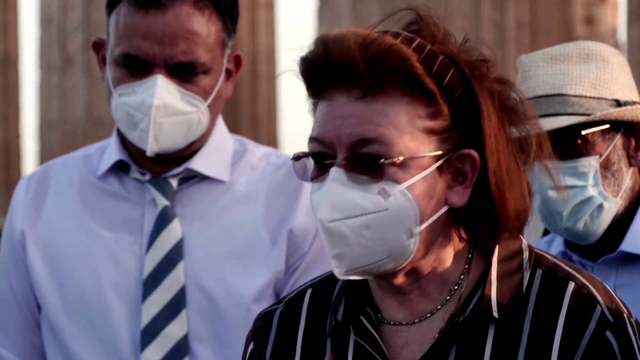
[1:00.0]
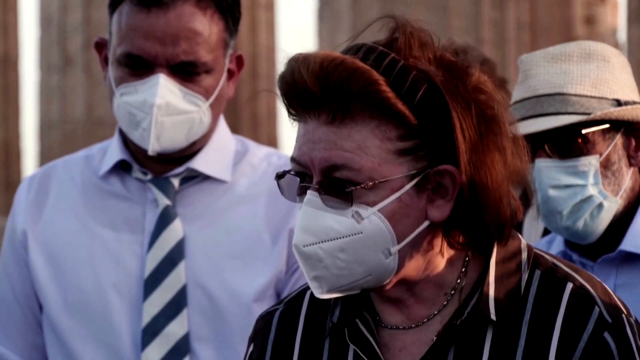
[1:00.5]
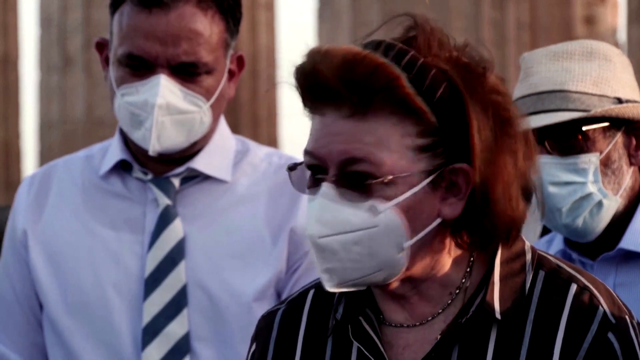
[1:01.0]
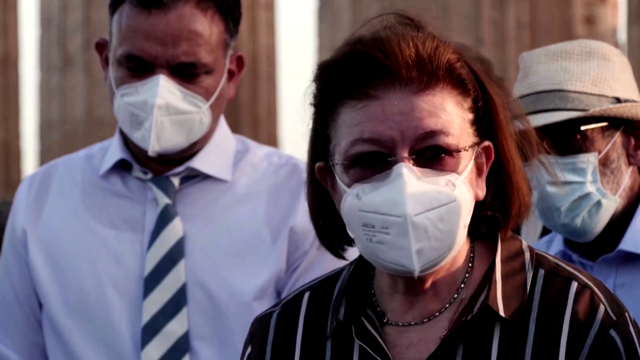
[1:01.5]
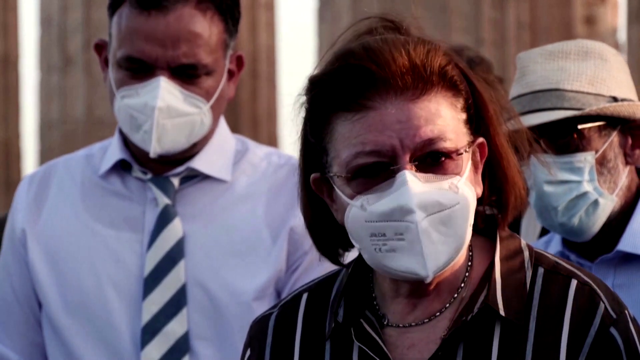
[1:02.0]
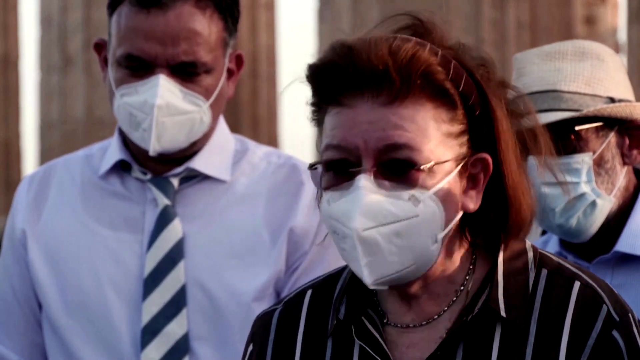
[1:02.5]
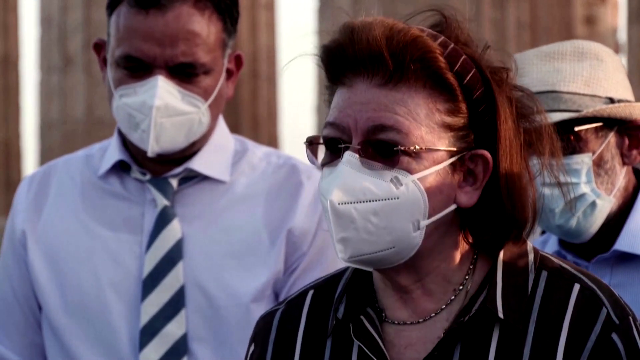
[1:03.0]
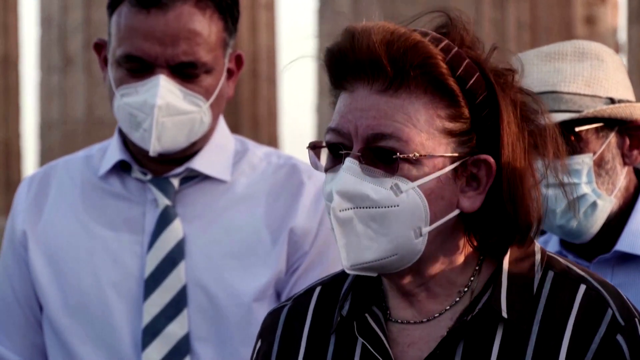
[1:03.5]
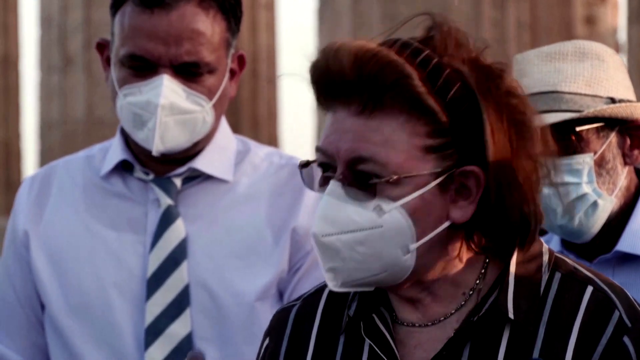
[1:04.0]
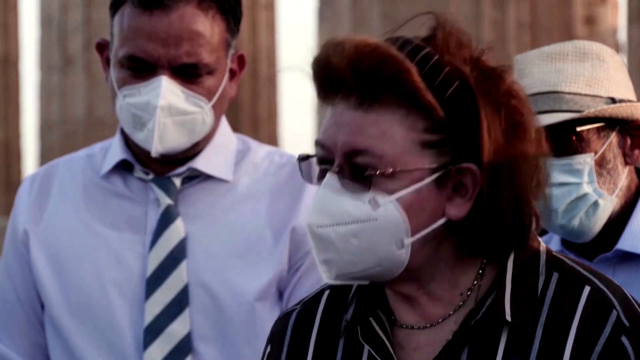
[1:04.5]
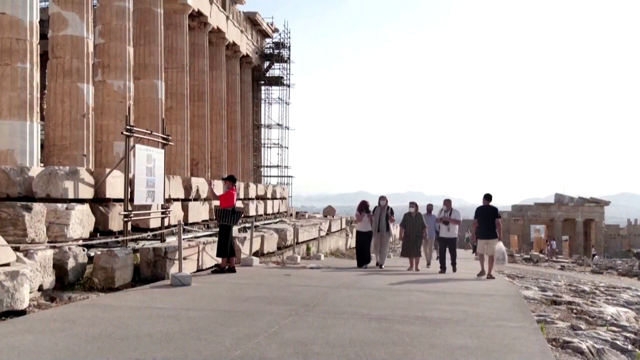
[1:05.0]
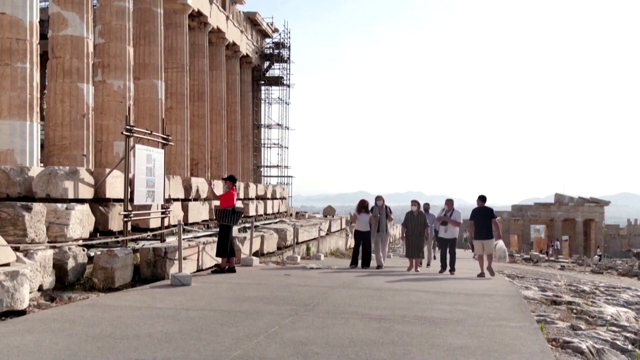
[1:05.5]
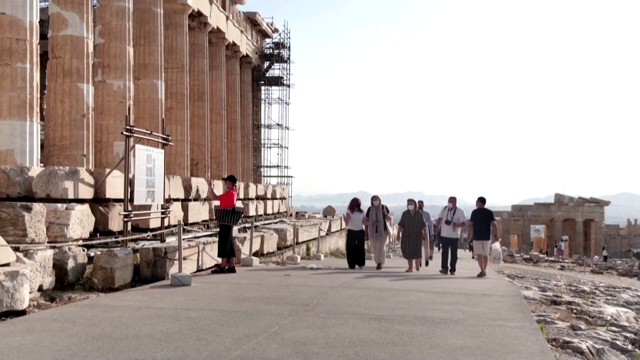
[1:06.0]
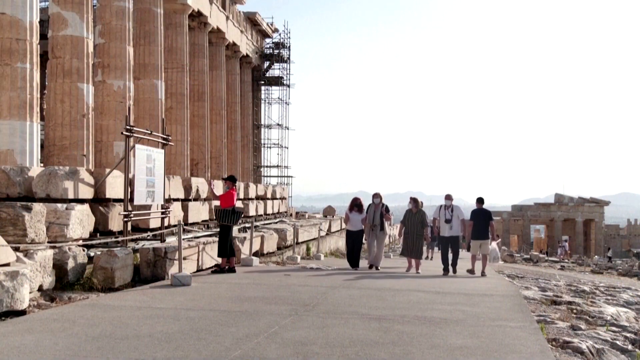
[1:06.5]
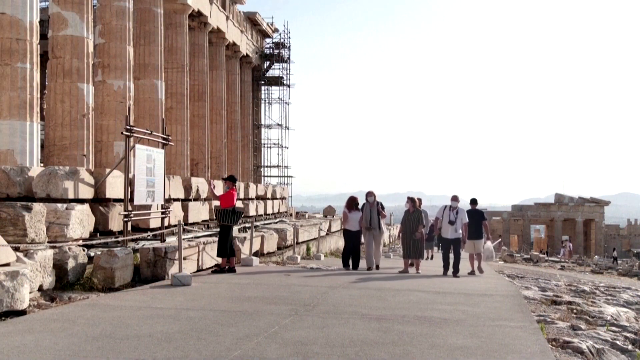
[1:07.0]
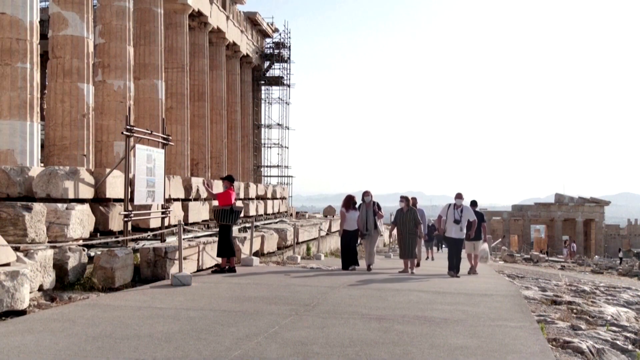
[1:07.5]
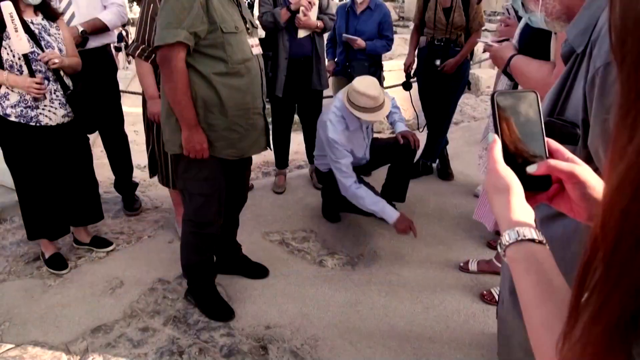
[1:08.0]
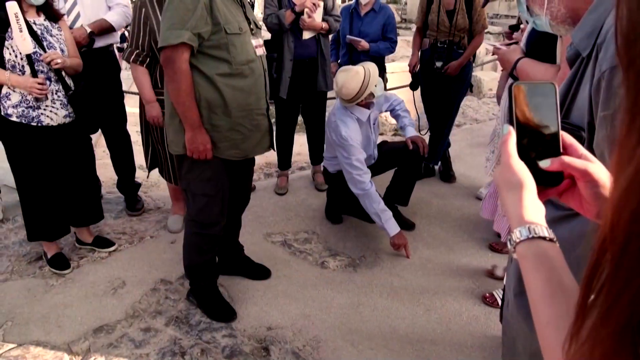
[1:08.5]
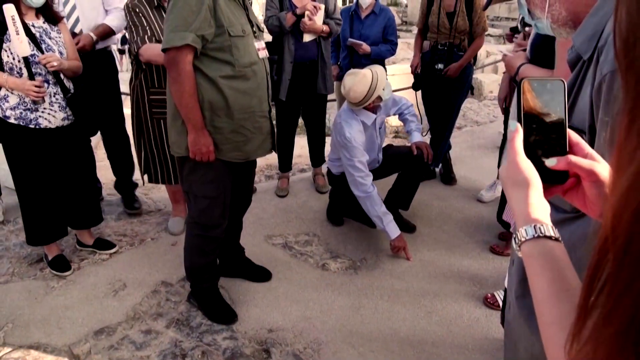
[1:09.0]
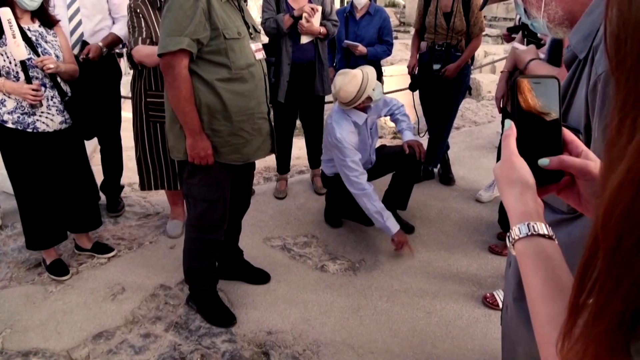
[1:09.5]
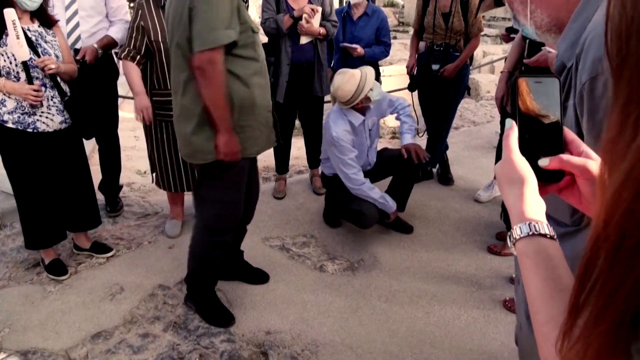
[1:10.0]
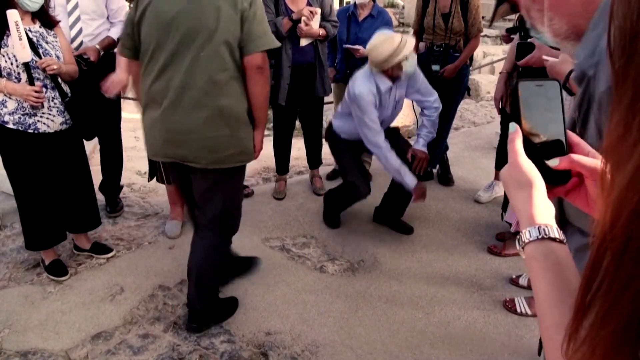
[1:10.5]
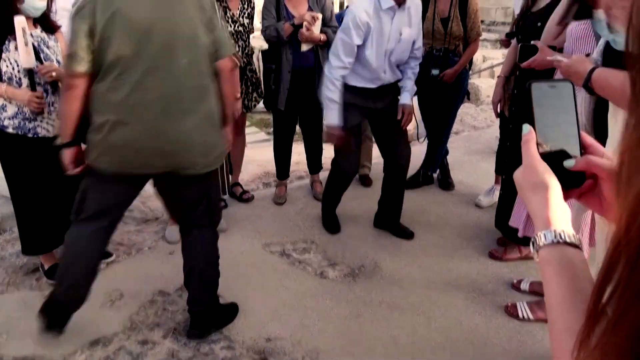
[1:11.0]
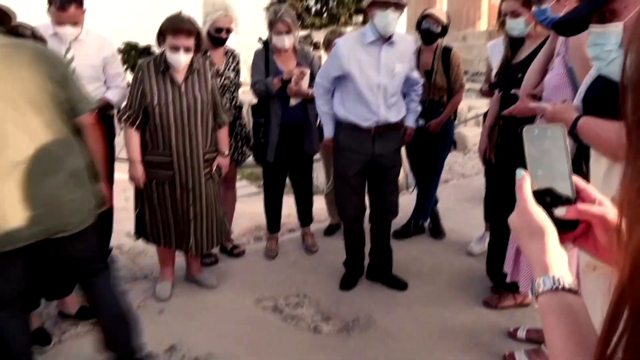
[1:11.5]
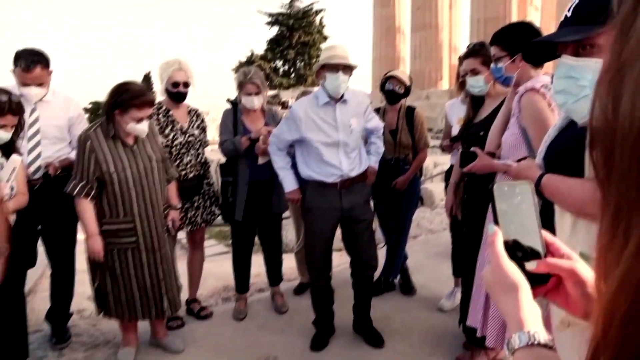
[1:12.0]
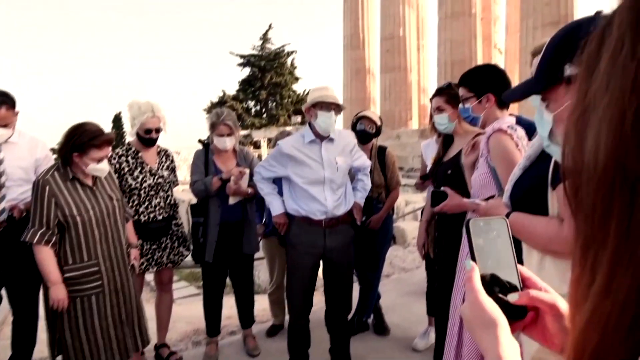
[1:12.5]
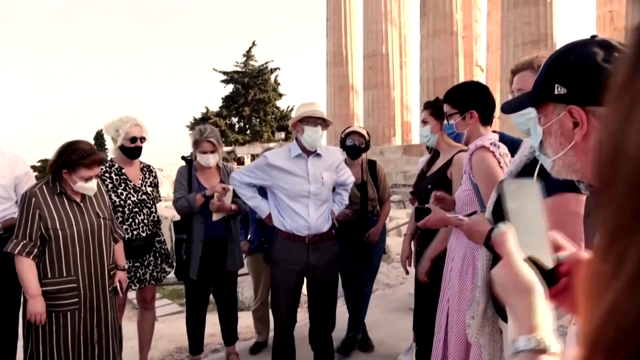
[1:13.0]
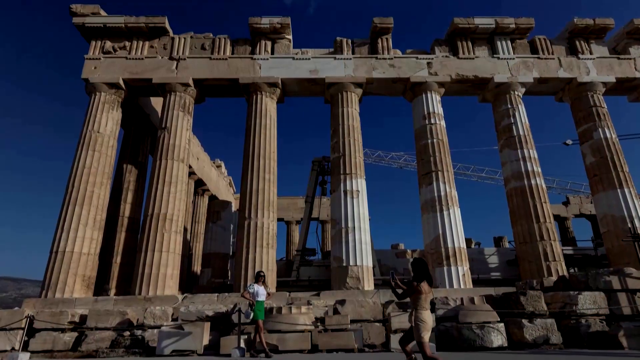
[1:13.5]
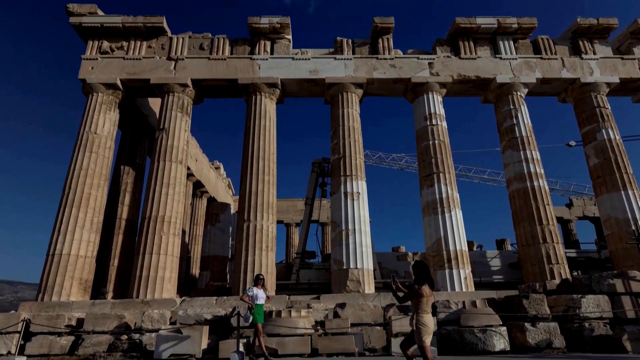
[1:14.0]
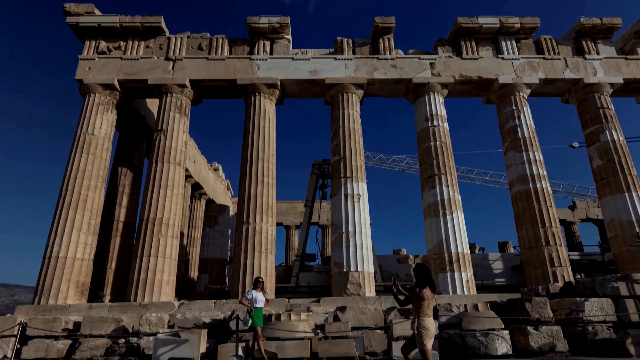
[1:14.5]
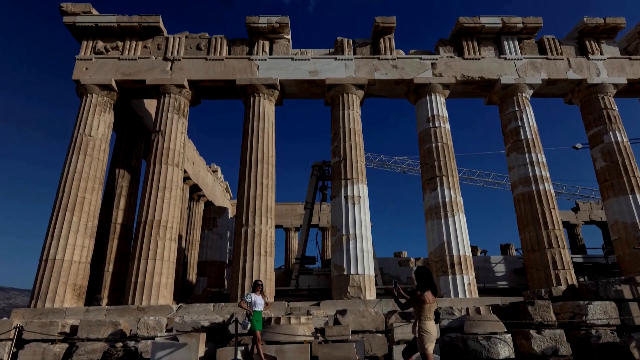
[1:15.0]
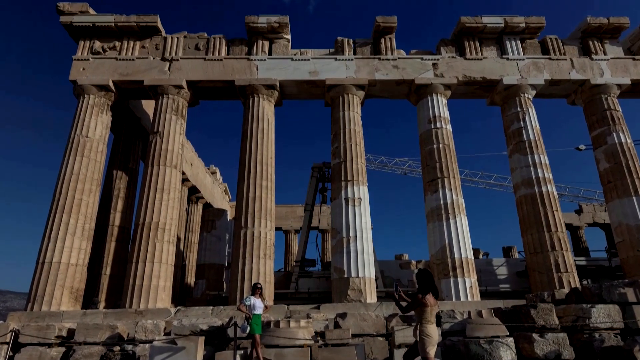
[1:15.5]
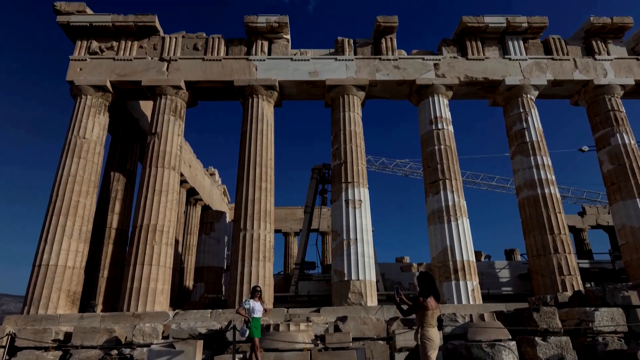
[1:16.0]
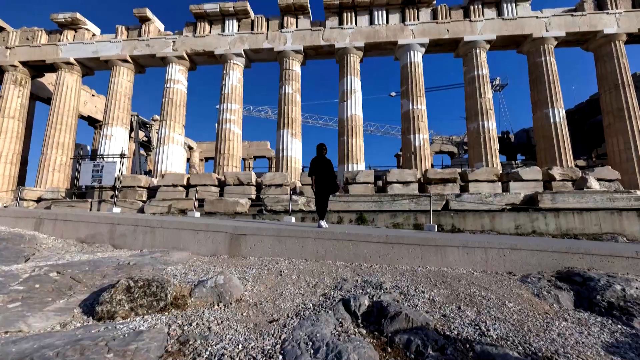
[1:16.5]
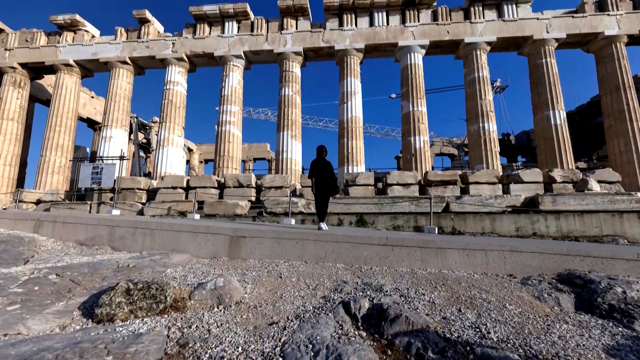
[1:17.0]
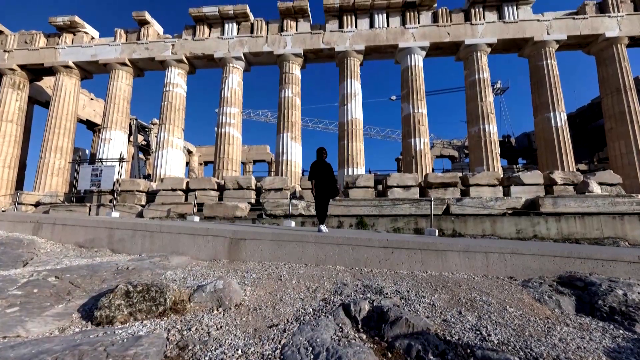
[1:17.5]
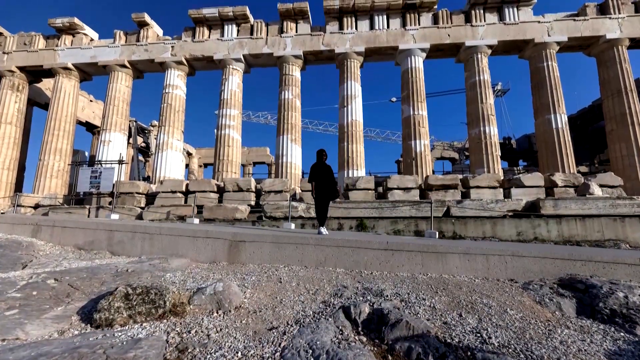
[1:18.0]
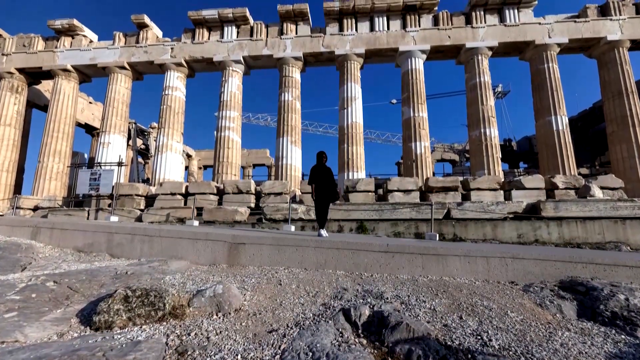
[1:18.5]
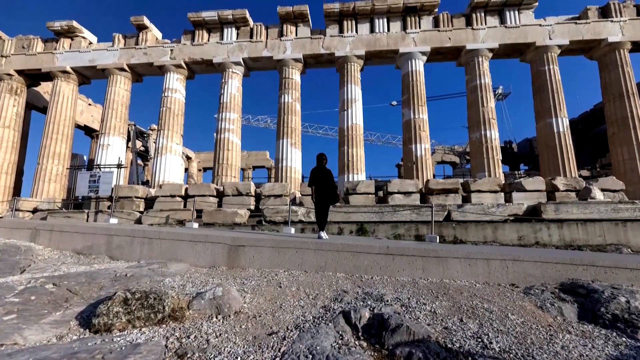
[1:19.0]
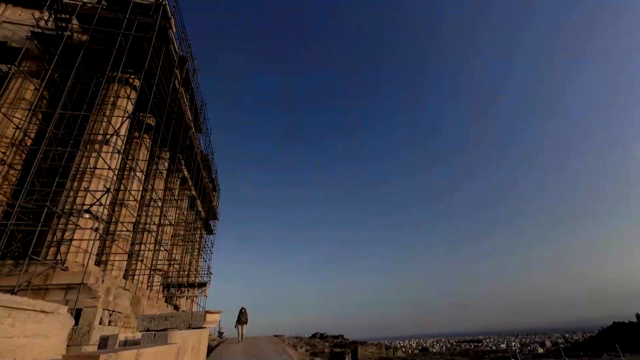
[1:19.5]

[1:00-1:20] The woman continues talking. She is an older woman who looks probably at least 60, possibly up to her mid-70s. She wears a long striped dress, kind of a flowing open tunic dress that looks very breezy, and a headband that is also striped. Her auburn, reddish hair is kind of chin-length. She talks to the same group, which includes a man with a camera and another man in a tie. Another shot shows the four walking together, and then more people appear. One of the men points down to the damaged flooring, and a group of apparently tourists or other interested people stand around them as they point and talk about the flooring. Some of them have cell phones and are taking videos of this man talking. Someone seems to be standing in the shot, or maybe on an important part of the flooring, and the woman with red hair kind of swats him away; he quickly moves out of the way.